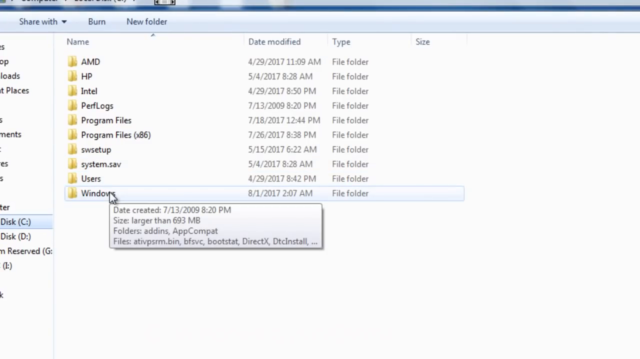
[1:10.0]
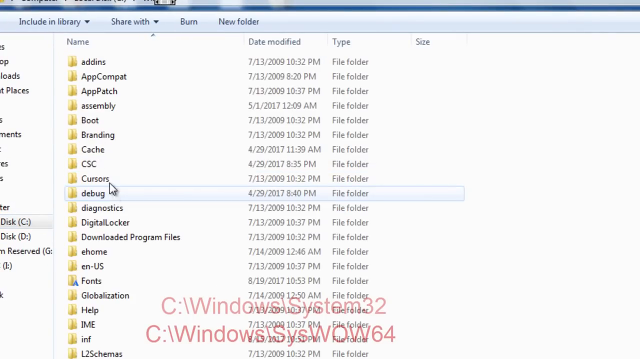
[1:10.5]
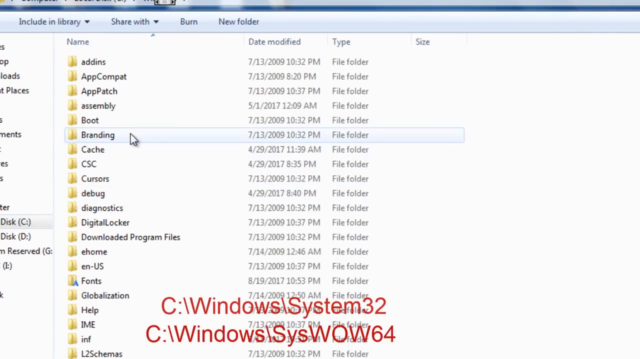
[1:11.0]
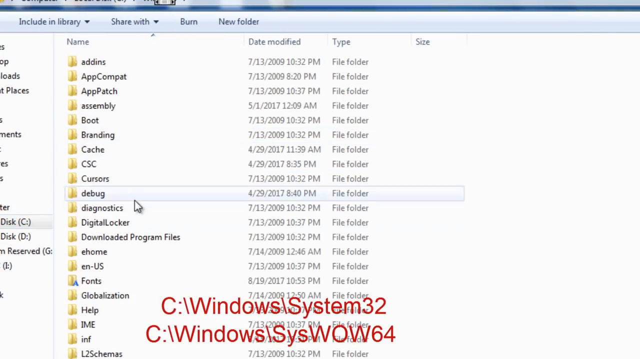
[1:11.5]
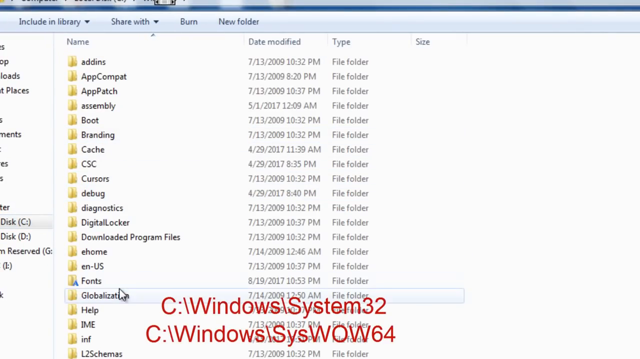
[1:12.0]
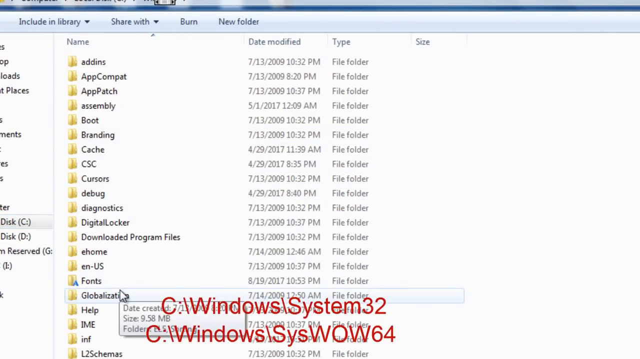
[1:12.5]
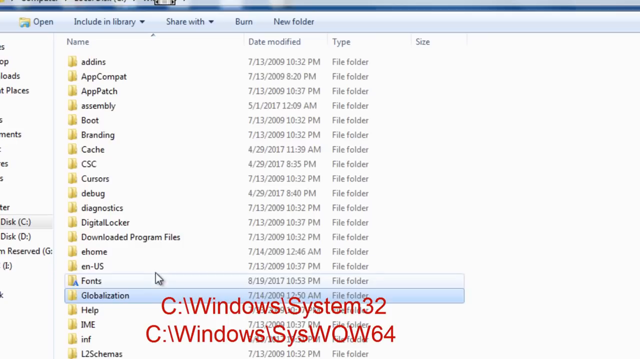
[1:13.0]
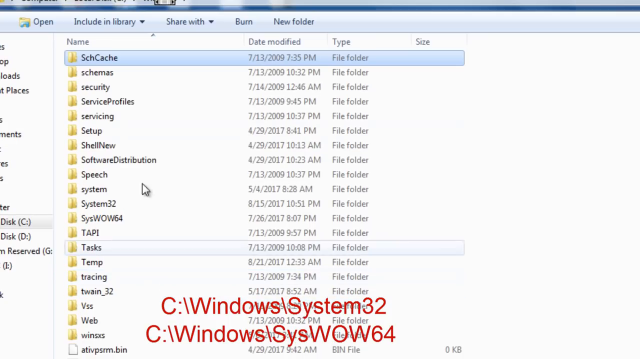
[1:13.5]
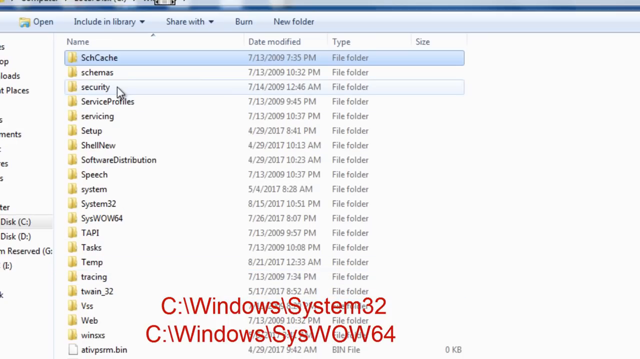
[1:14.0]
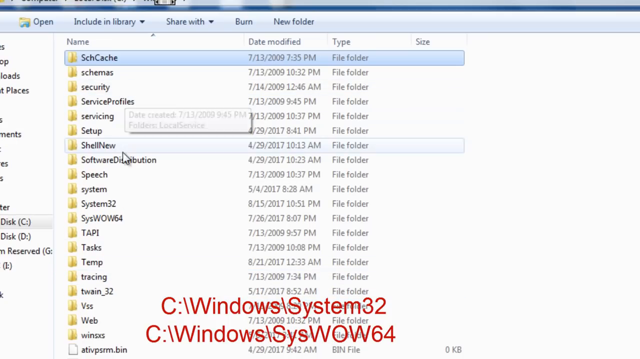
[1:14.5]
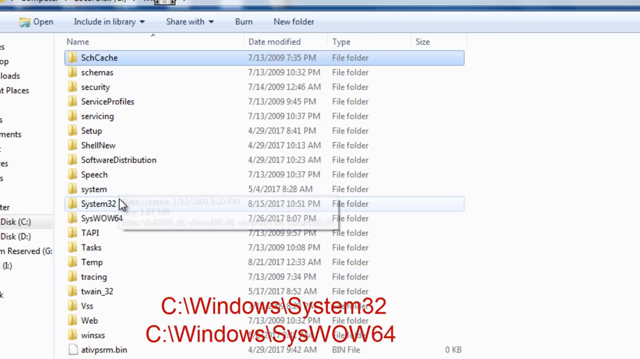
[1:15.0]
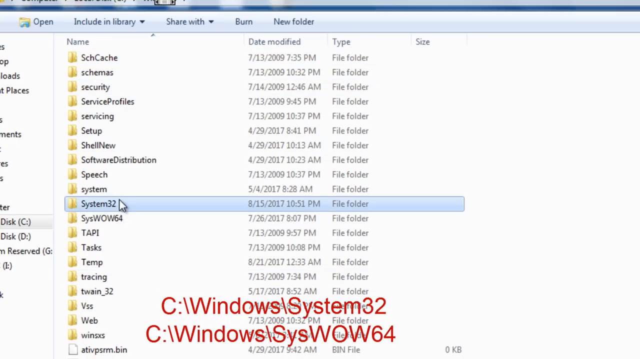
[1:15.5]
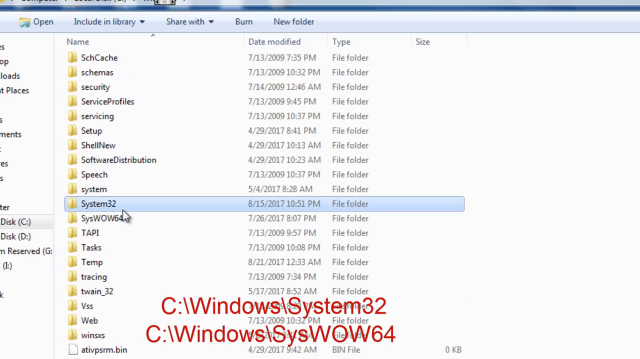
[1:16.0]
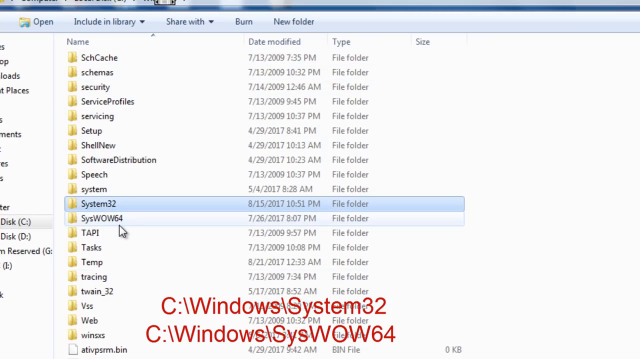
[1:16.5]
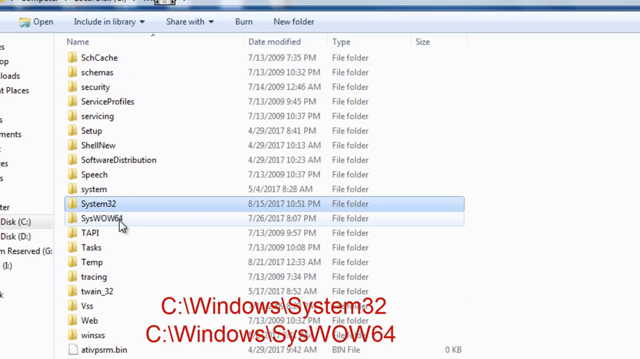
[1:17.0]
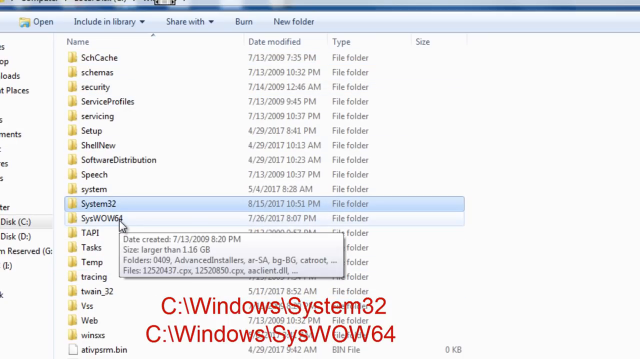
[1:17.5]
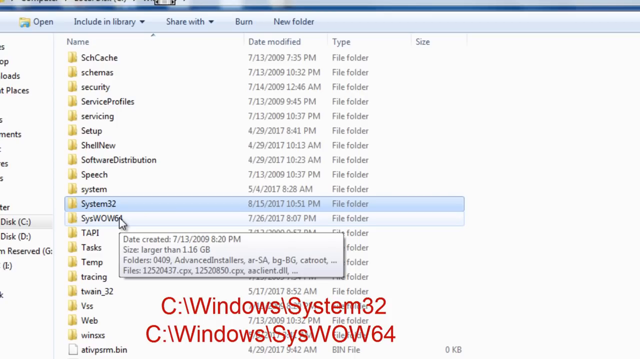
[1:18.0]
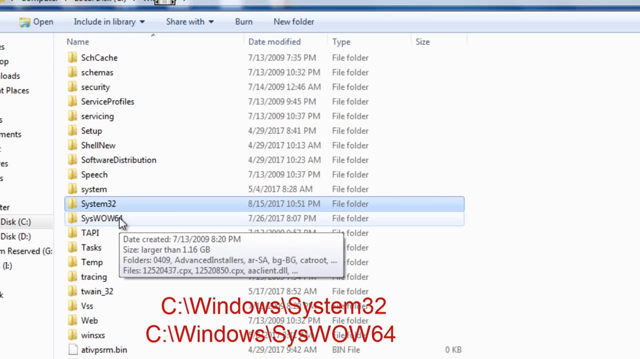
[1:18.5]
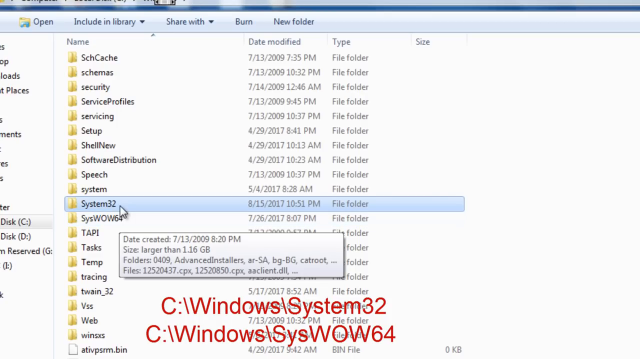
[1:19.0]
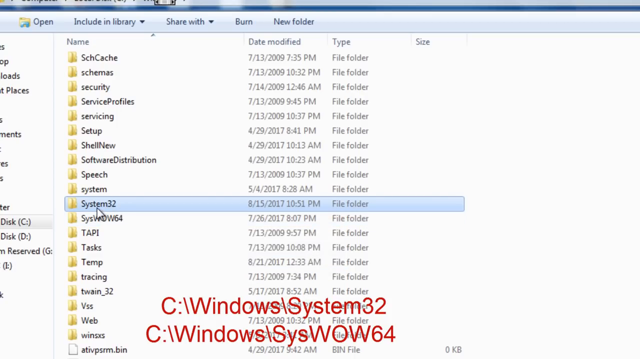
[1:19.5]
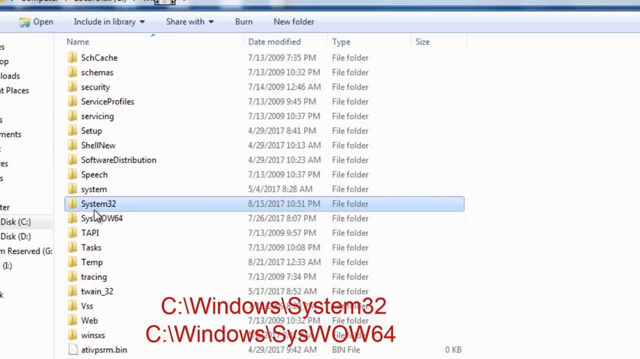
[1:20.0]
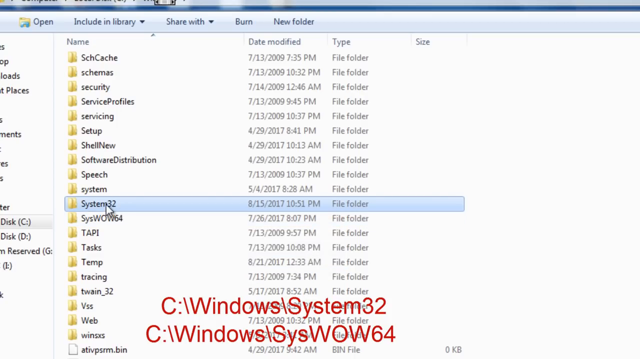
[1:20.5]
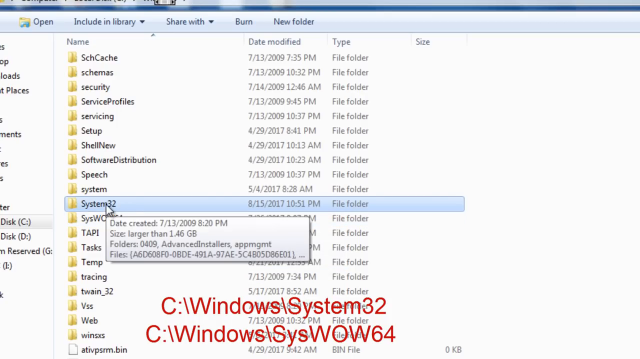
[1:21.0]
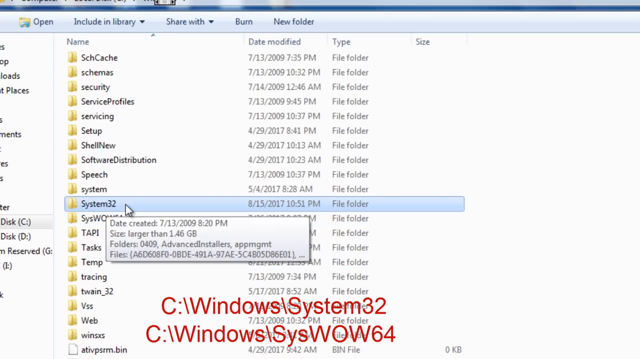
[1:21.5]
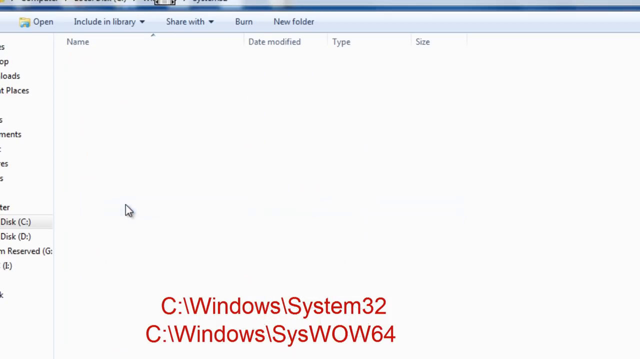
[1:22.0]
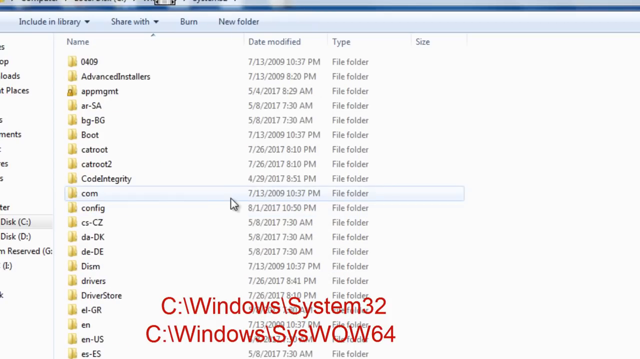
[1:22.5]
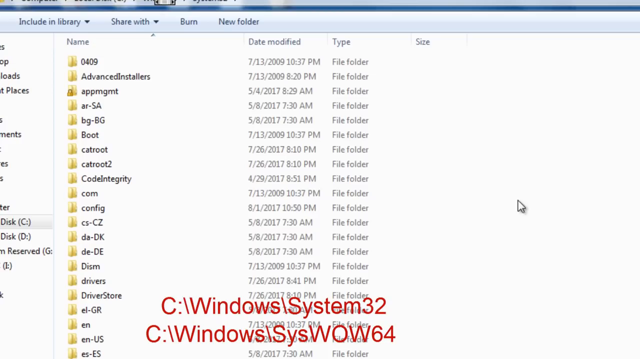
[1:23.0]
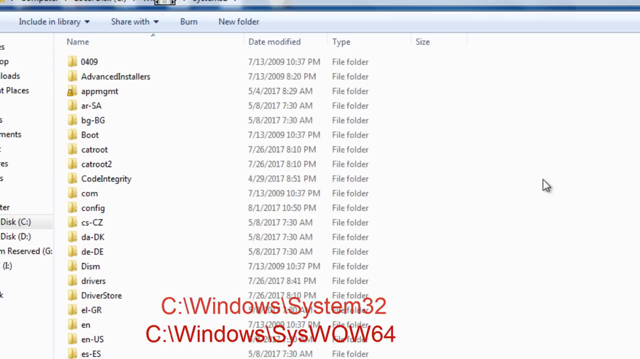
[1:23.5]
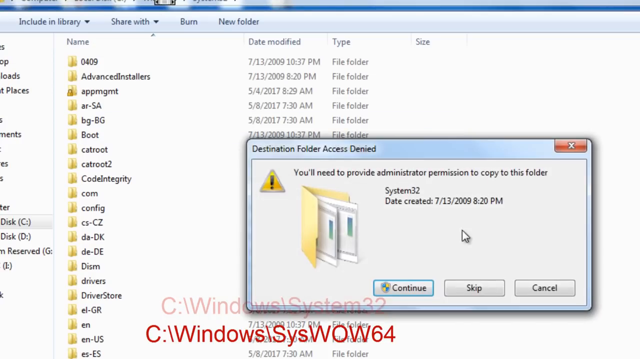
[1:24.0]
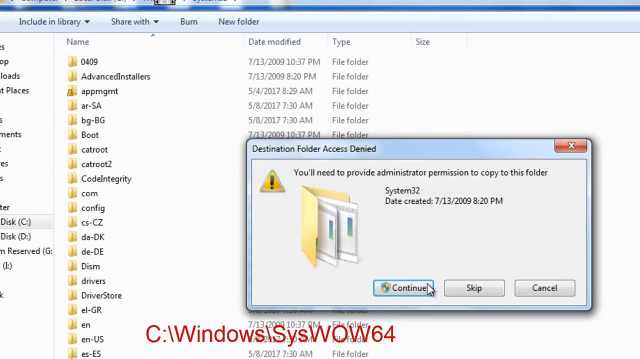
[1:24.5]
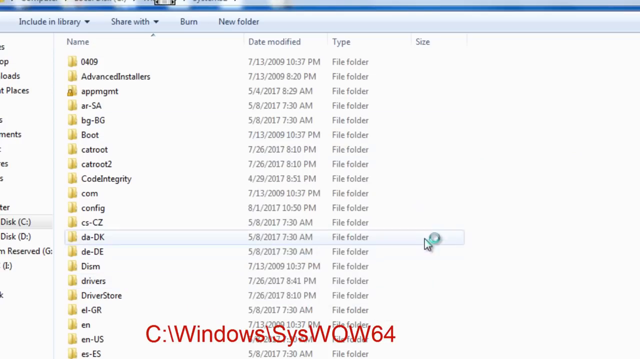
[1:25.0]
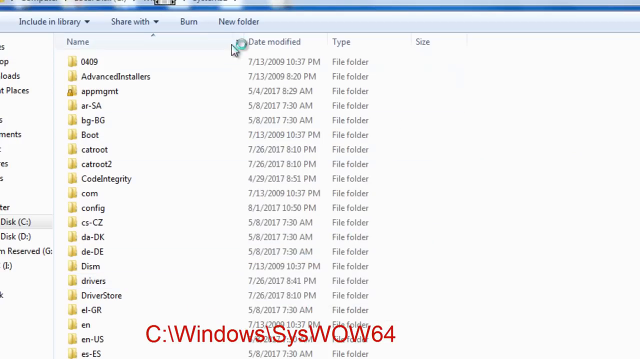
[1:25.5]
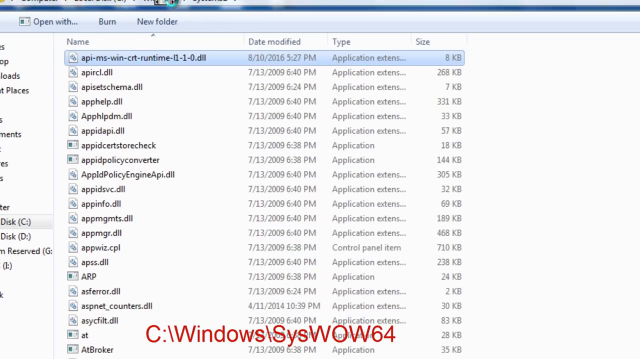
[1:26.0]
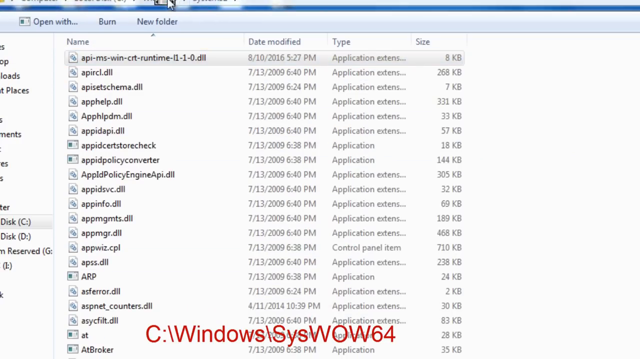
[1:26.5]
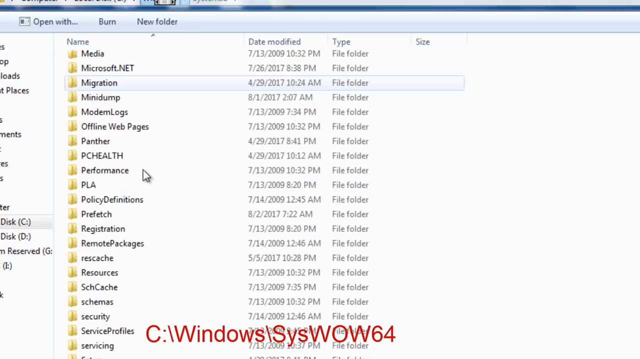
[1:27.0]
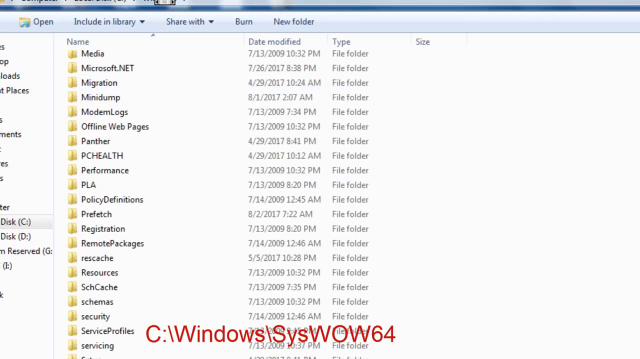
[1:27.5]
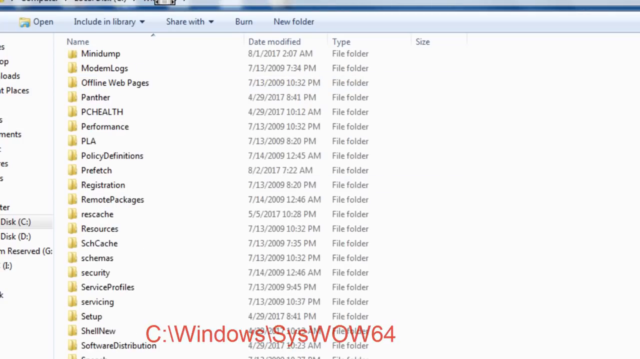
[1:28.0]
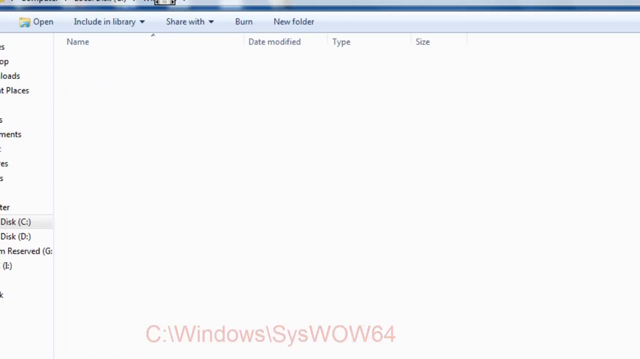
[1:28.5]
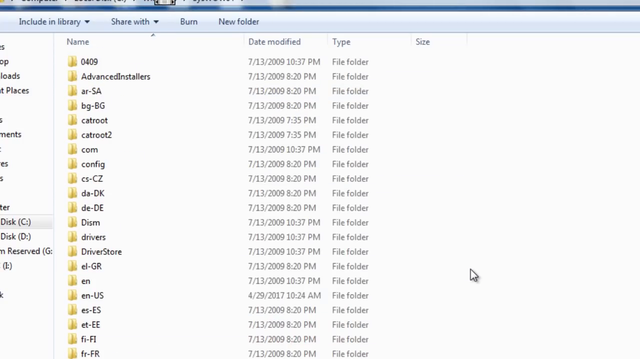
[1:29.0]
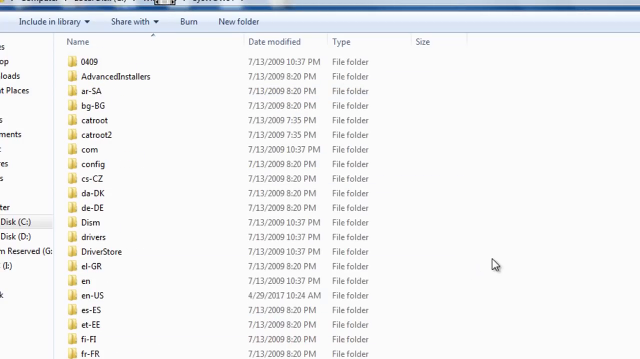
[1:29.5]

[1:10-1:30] The person clicks on Globalization and then on System32, moving the cursor onto System32 to open it. A message says "you'll need to provide administrator permission to copy this folder," with System32 listed as date created 7-13-2009 at 8:20 pm. The person clicks the Continue button at the bottom of the screen, and it loads for a while. The person then scrolls down and clicks on the Windows button, which returns to the main screen.